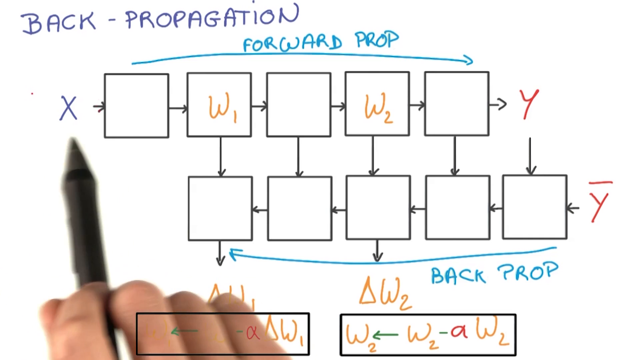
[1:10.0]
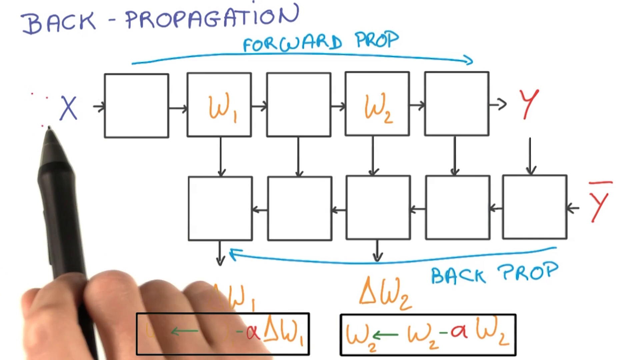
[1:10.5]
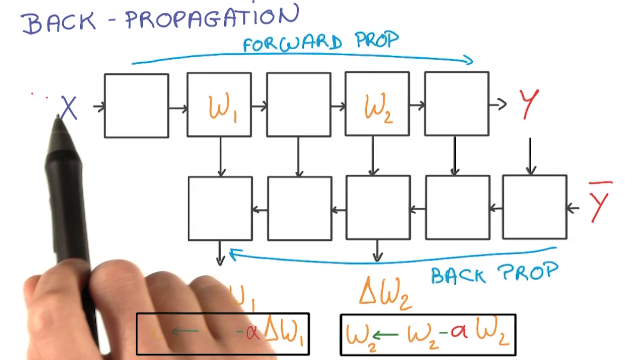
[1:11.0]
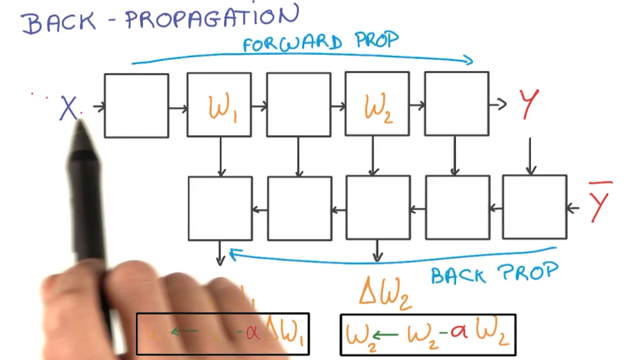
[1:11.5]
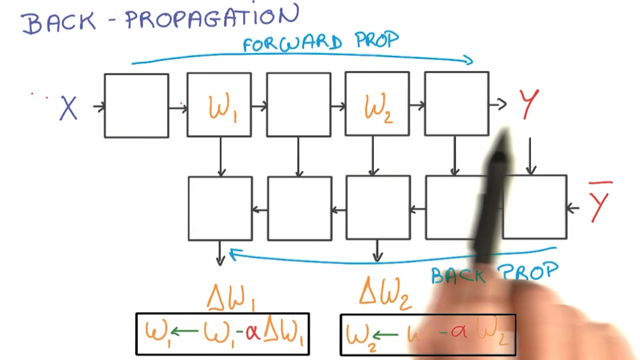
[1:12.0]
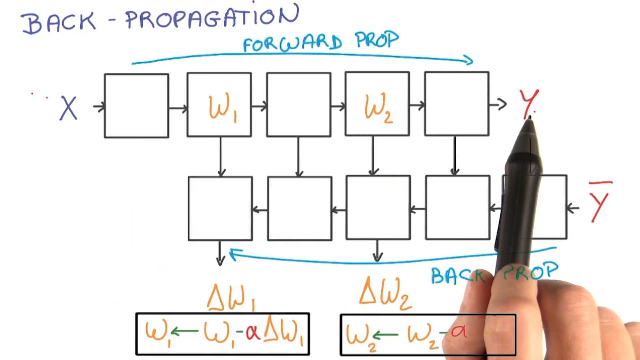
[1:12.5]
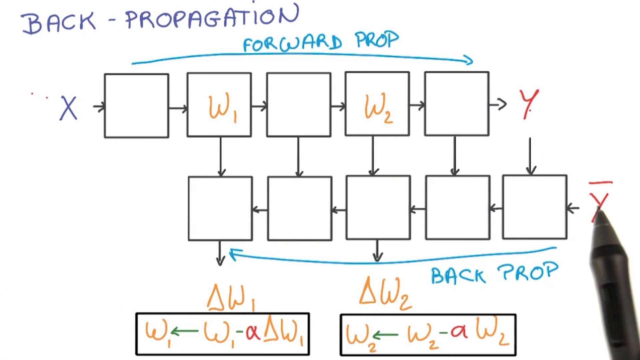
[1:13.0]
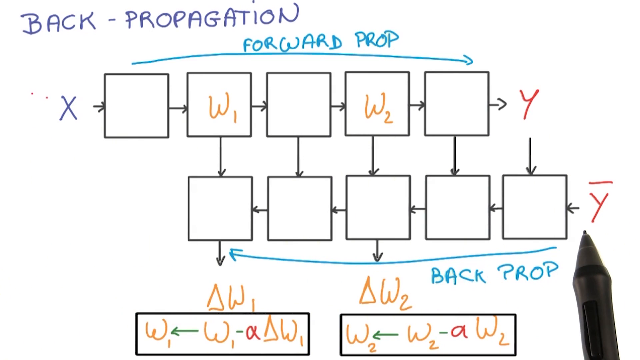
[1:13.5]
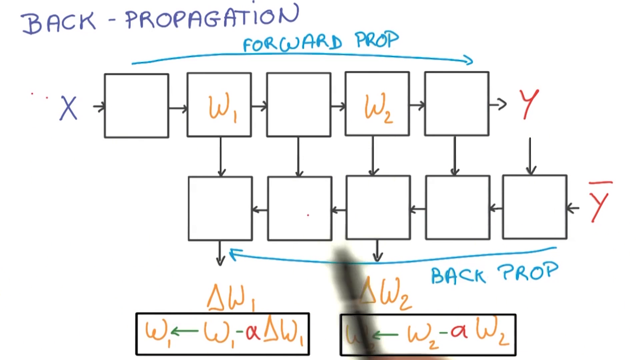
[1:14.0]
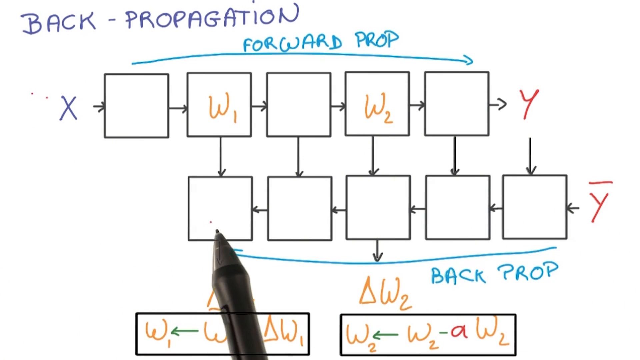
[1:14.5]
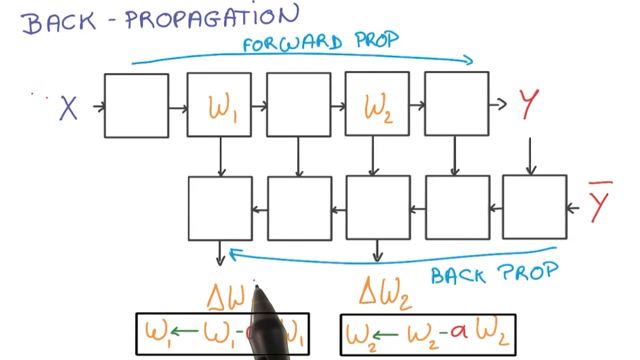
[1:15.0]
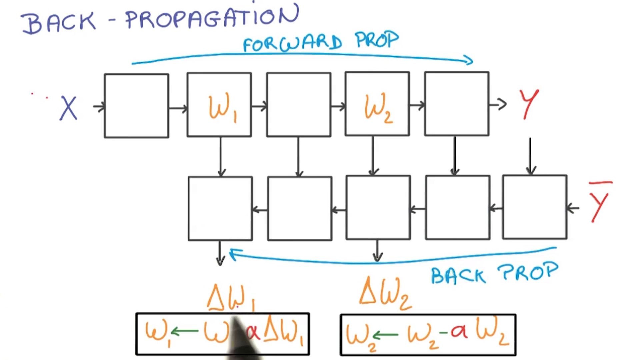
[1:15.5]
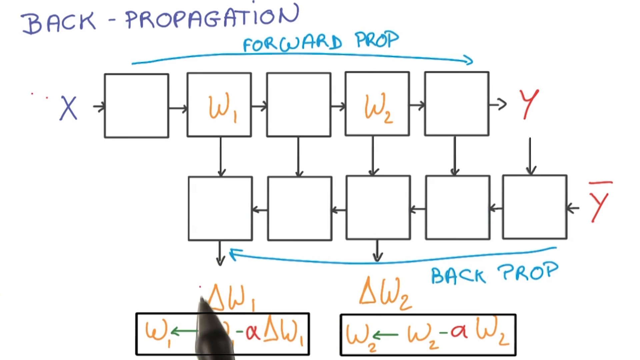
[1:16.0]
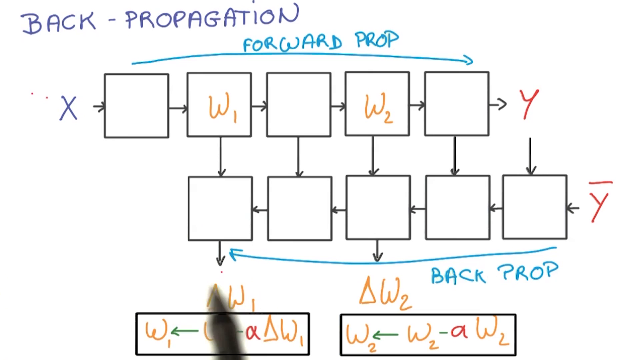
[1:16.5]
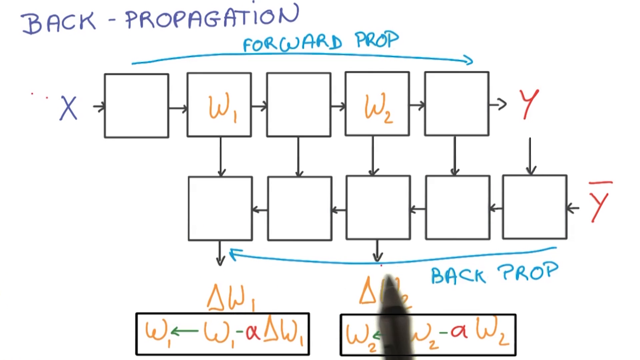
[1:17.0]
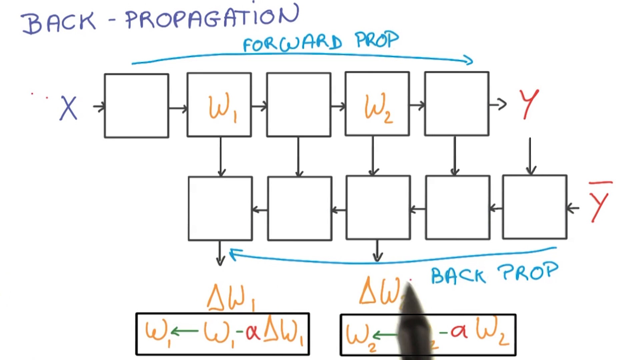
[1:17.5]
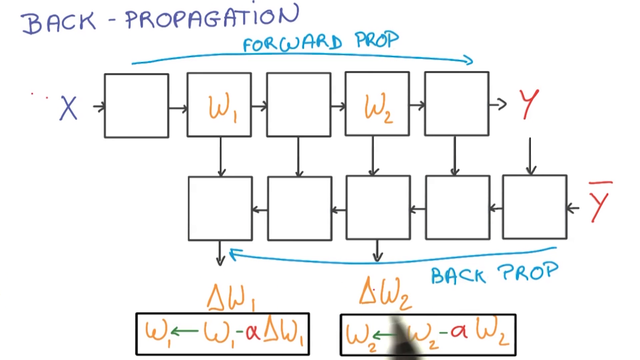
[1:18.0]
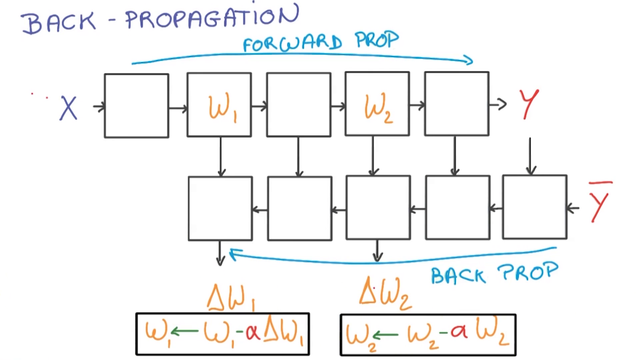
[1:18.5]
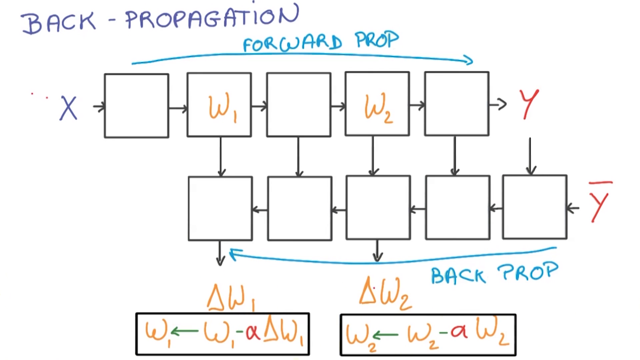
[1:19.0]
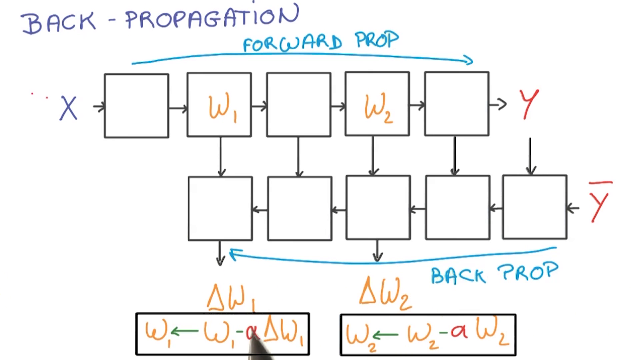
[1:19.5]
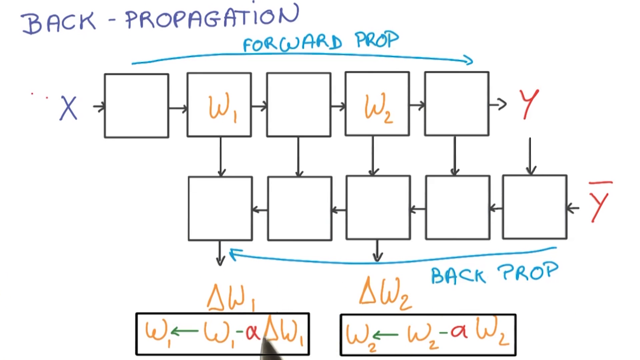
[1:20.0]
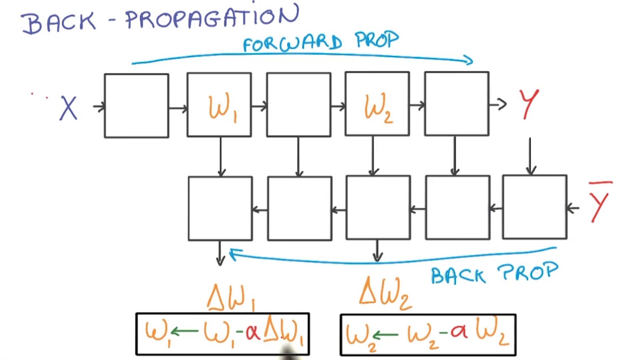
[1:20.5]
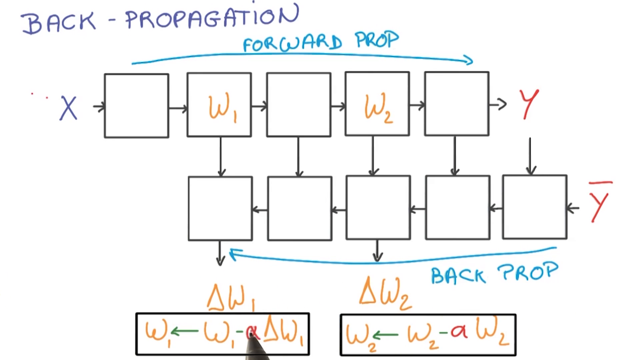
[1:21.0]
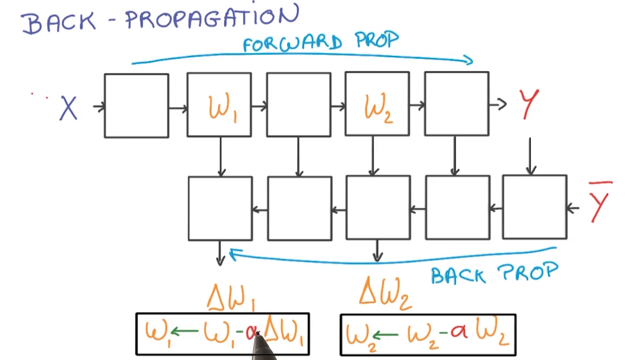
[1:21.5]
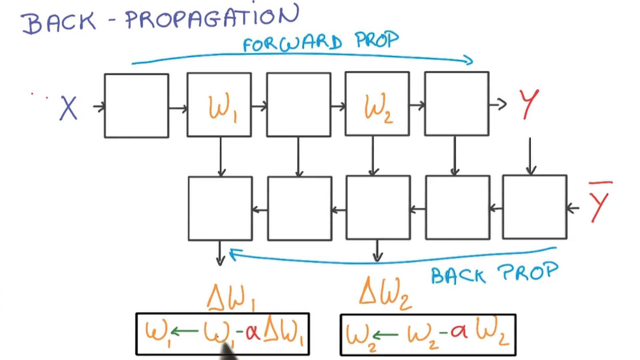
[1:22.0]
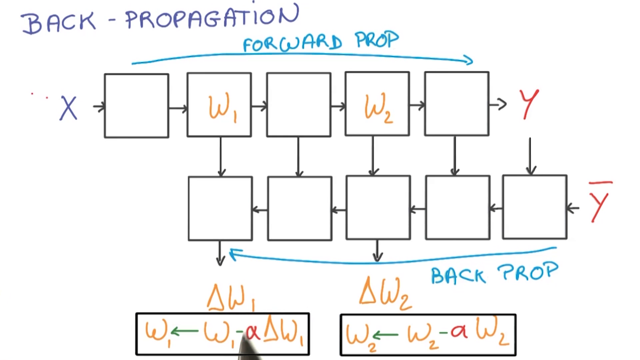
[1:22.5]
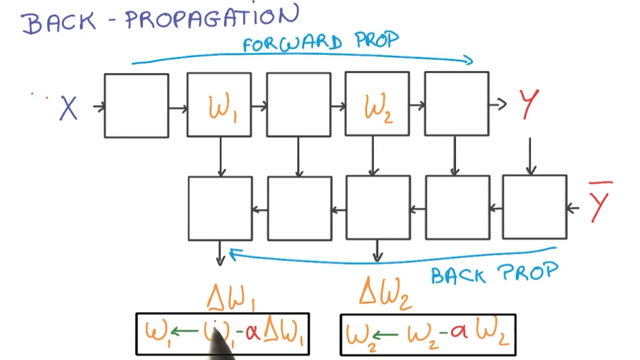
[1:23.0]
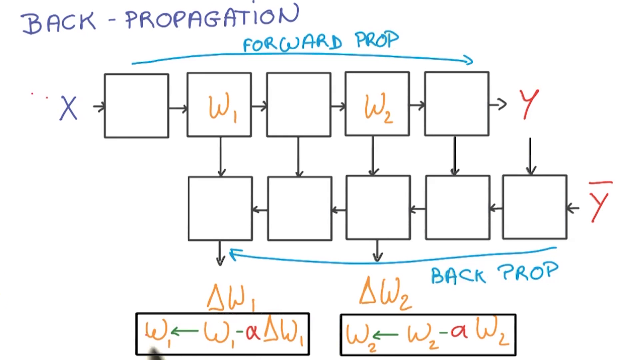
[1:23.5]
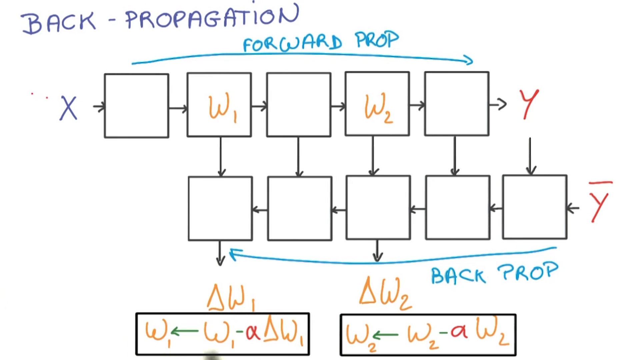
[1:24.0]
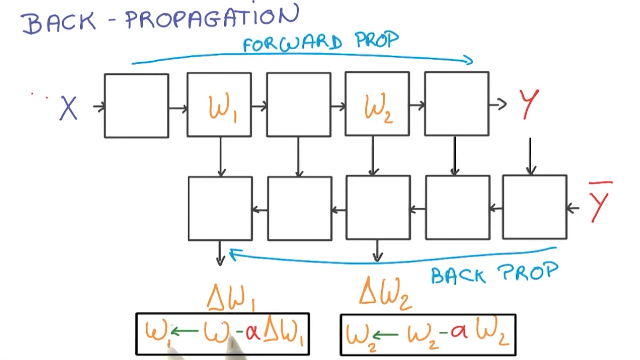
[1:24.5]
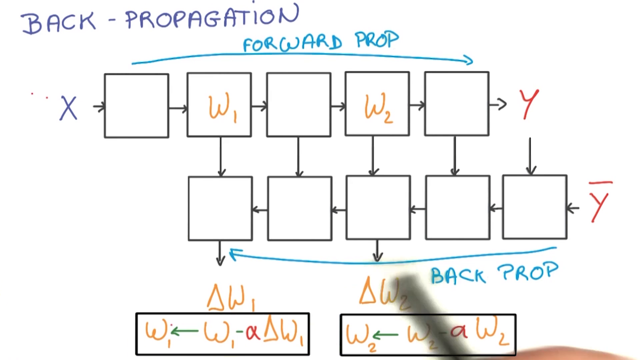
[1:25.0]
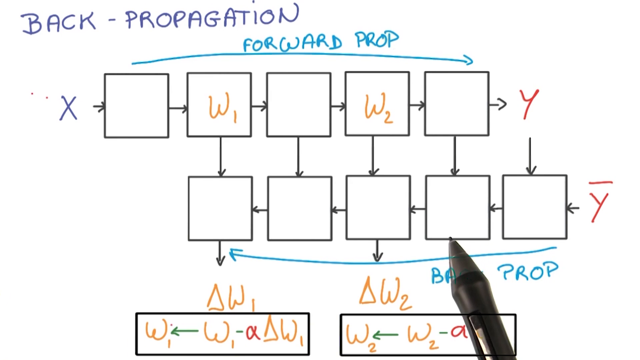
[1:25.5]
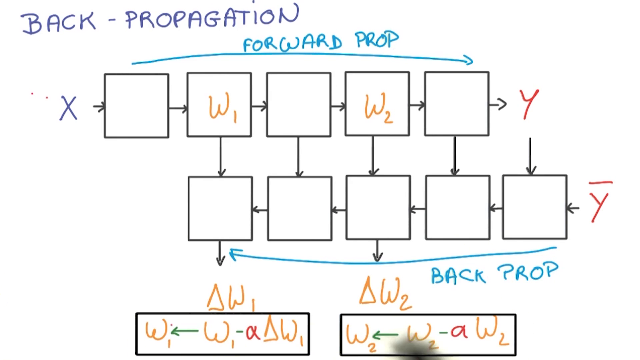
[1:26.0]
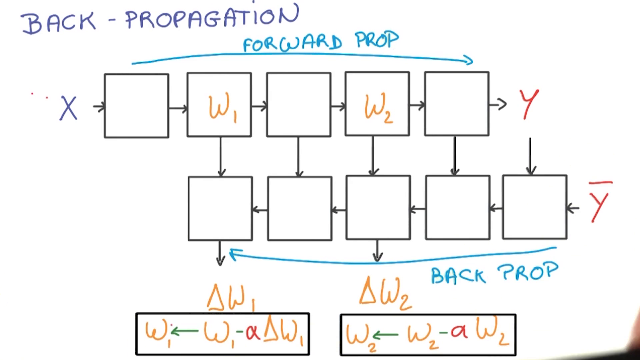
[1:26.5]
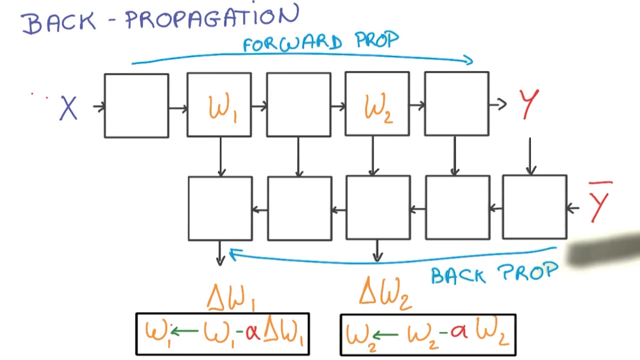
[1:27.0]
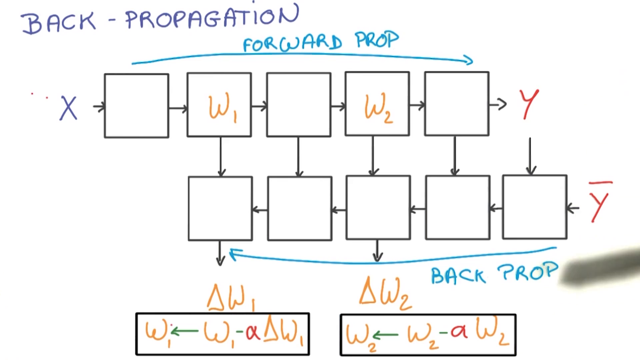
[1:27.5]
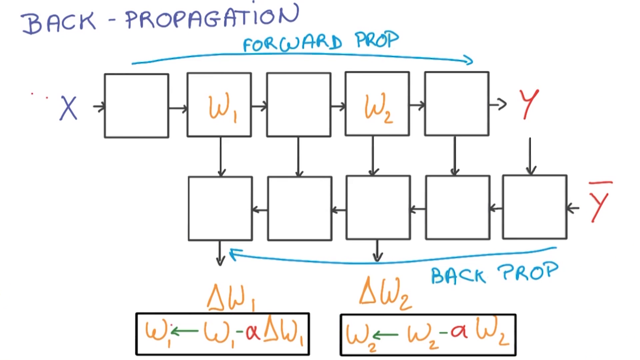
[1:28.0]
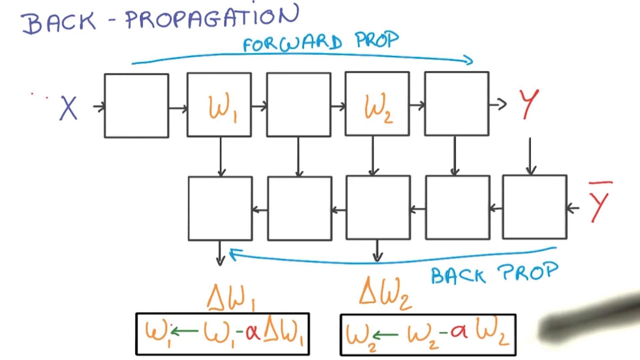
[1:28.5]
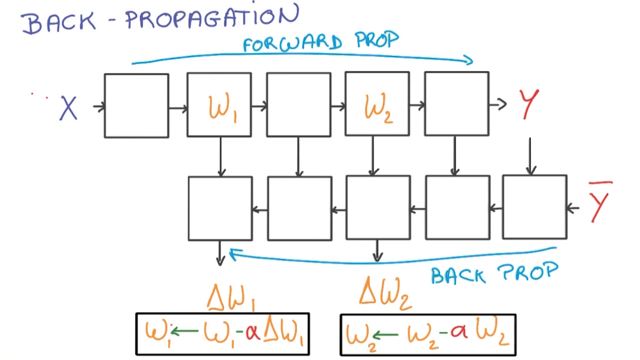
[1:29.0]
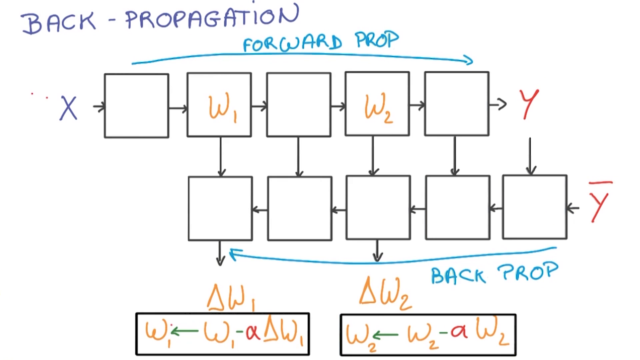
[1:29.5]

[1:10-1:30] The same graph is shown, with formulas at the bottom. One formula gives W1 as the result of W1 and A delta W1, and another on the right side gives W2 as the result of W2 and A W2; the operation is apparently not a minus. Green arrows point to different parts of the screen against a white background. Many letters appear as the person types the formulas, and the arrows mark the way the information goes.